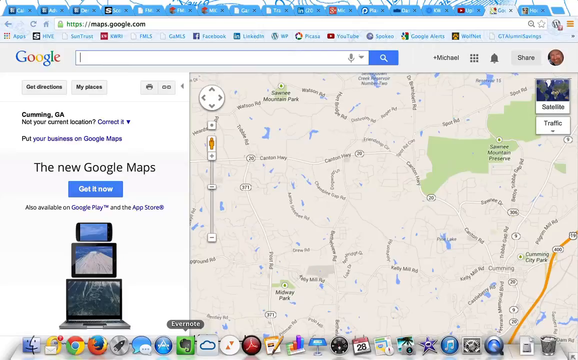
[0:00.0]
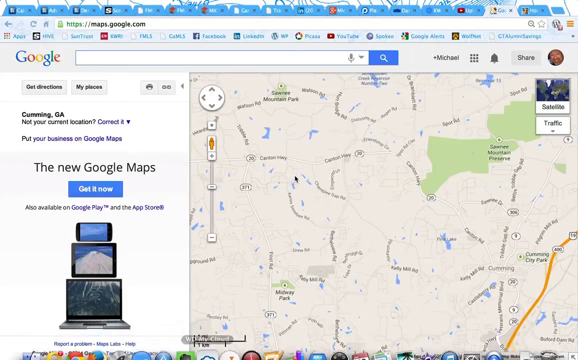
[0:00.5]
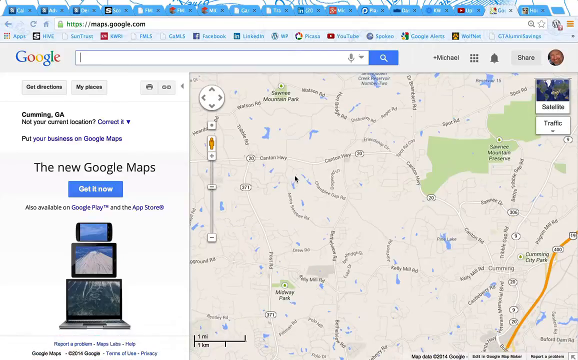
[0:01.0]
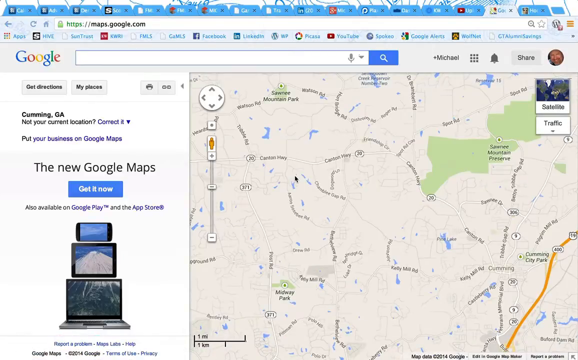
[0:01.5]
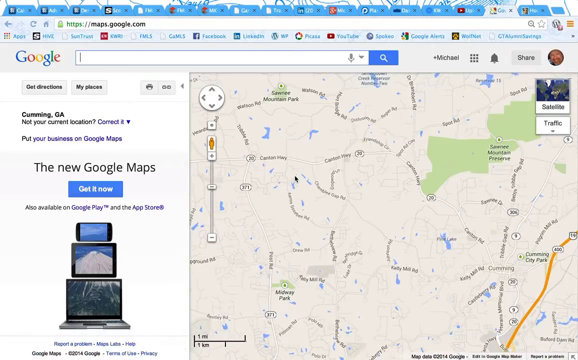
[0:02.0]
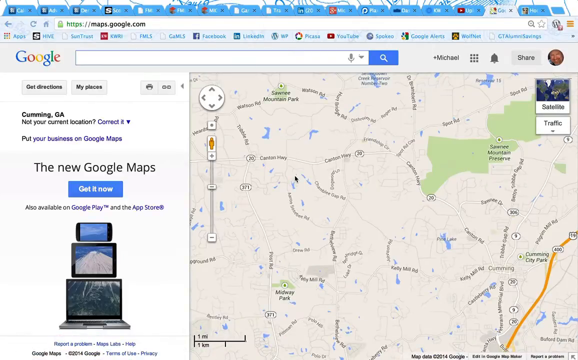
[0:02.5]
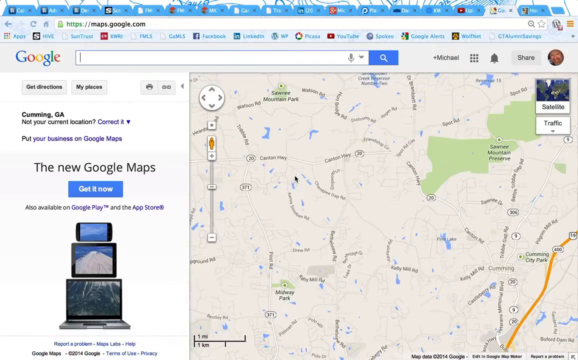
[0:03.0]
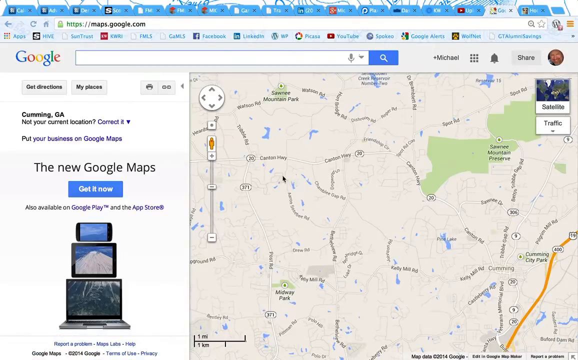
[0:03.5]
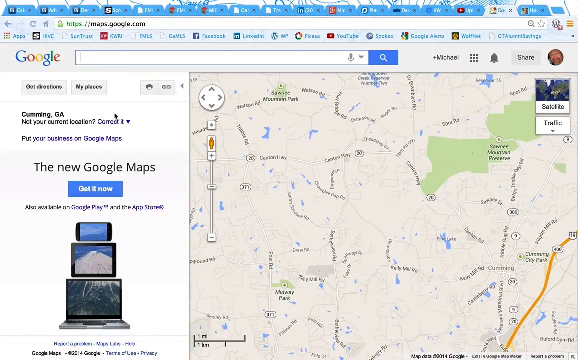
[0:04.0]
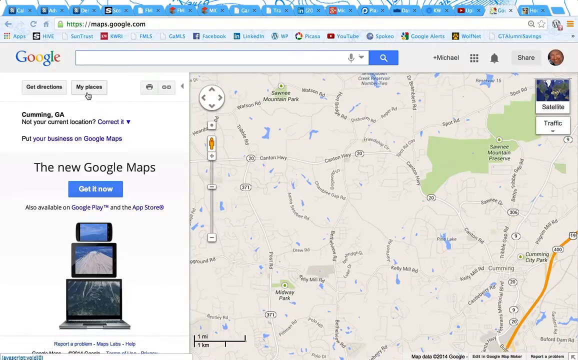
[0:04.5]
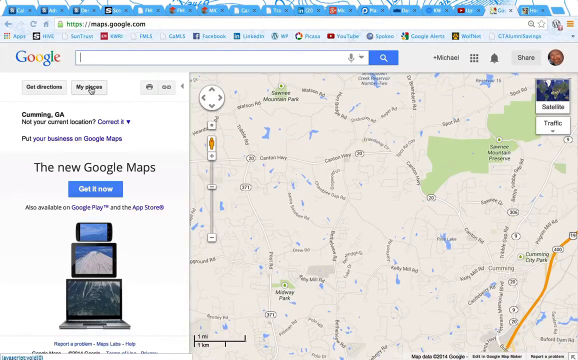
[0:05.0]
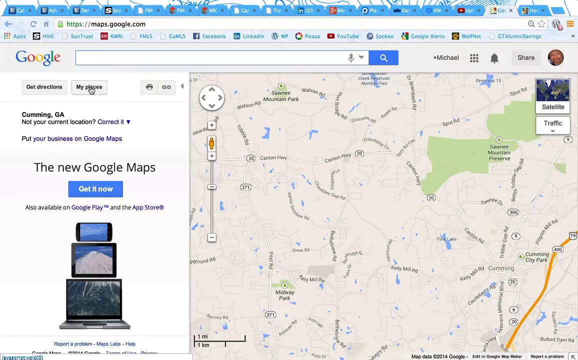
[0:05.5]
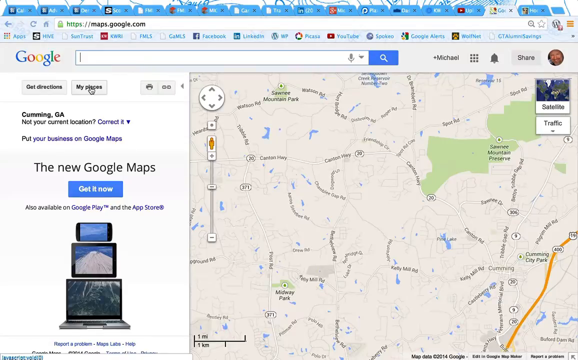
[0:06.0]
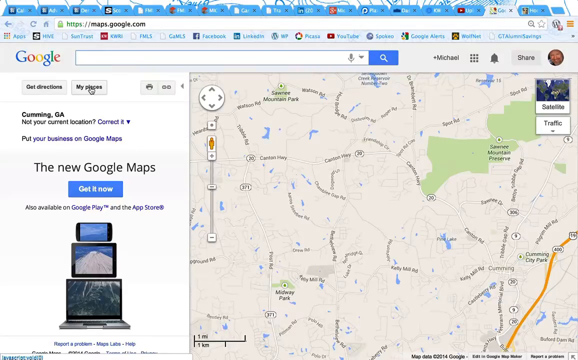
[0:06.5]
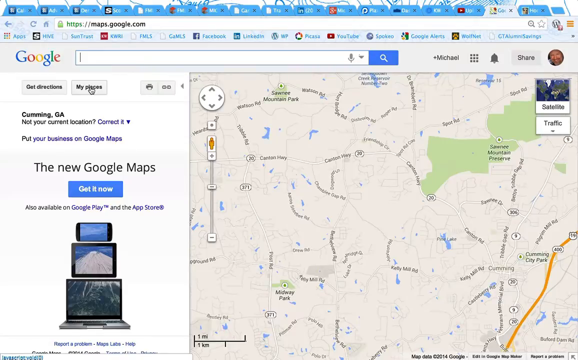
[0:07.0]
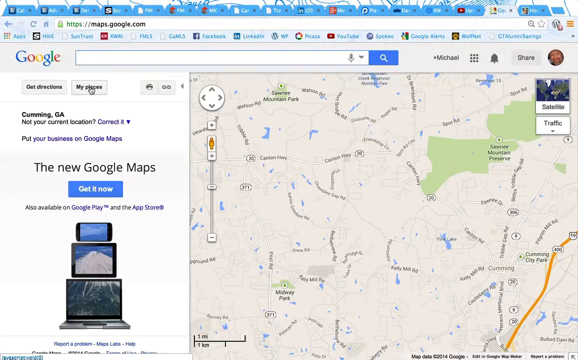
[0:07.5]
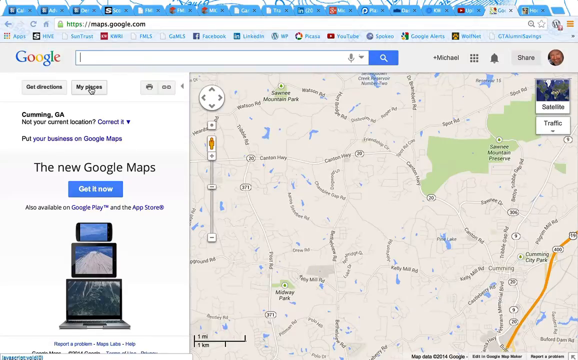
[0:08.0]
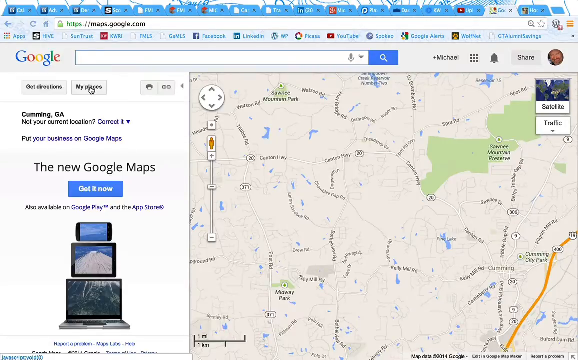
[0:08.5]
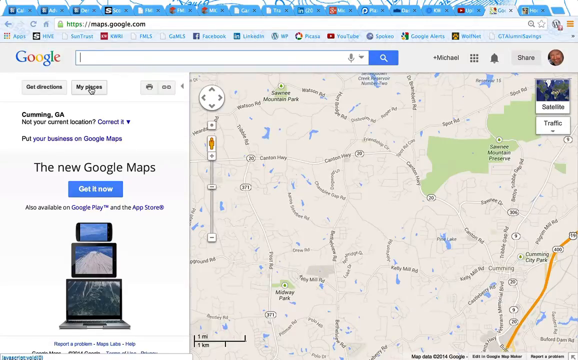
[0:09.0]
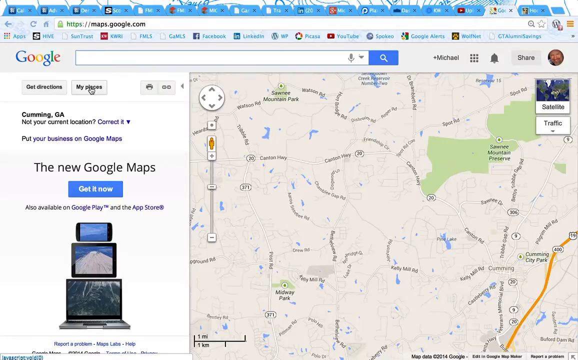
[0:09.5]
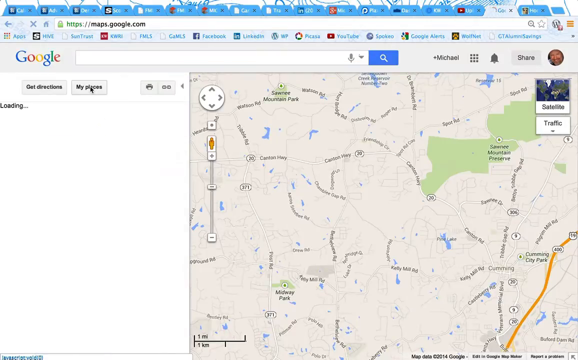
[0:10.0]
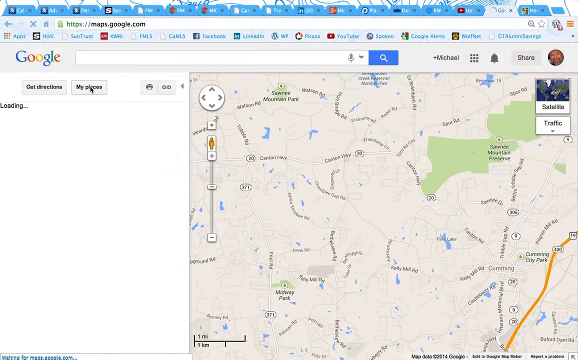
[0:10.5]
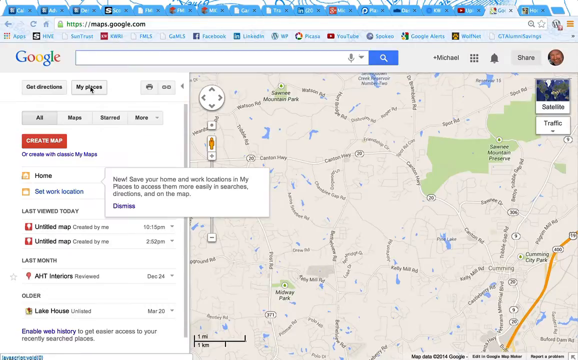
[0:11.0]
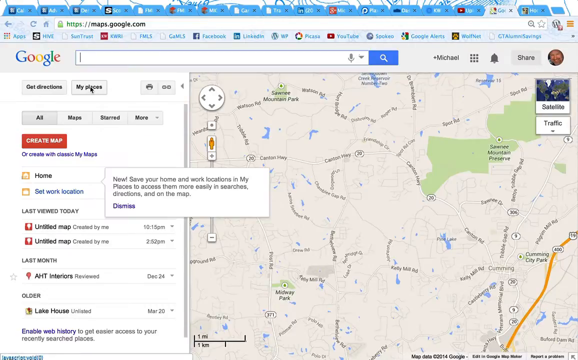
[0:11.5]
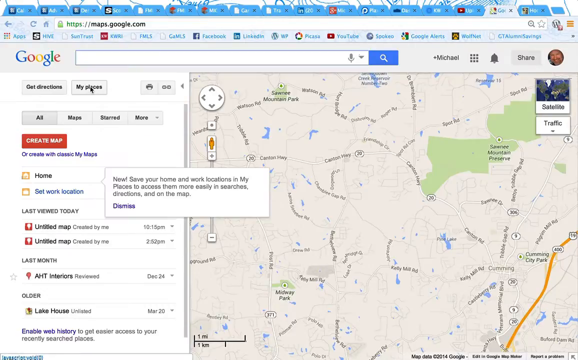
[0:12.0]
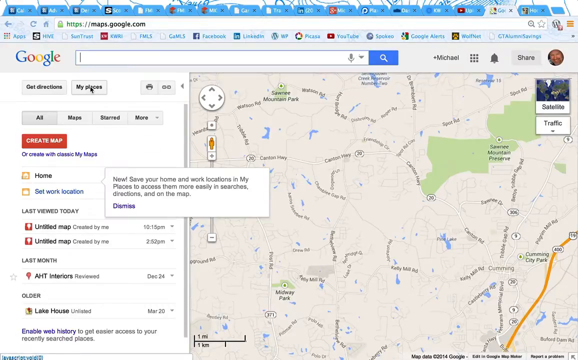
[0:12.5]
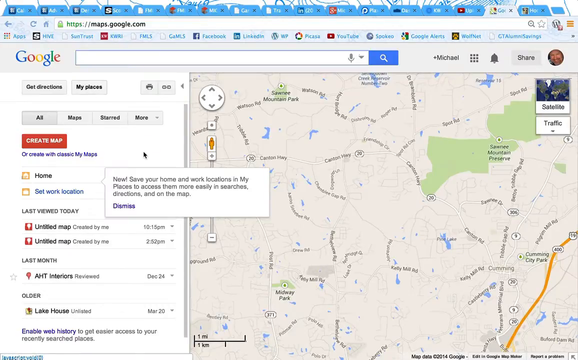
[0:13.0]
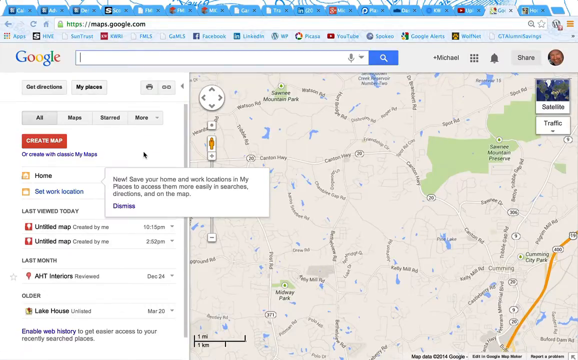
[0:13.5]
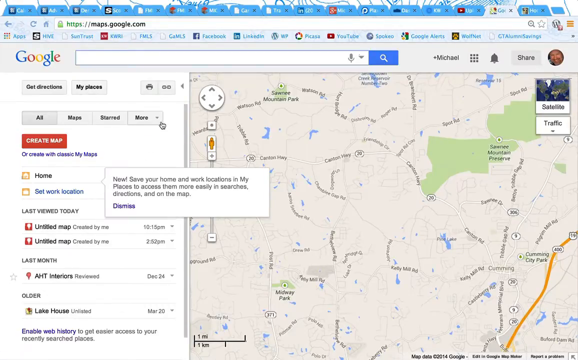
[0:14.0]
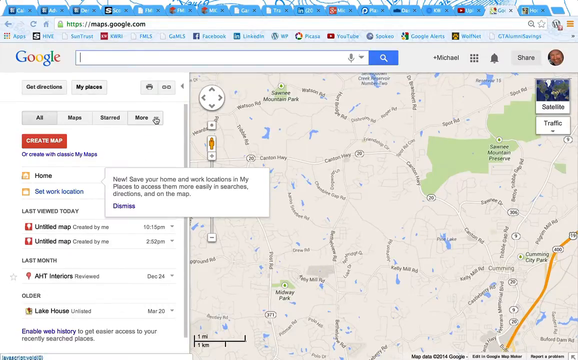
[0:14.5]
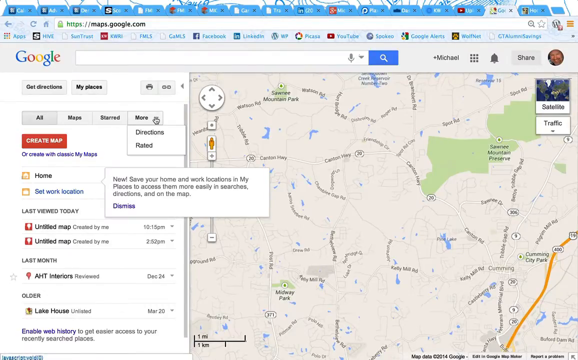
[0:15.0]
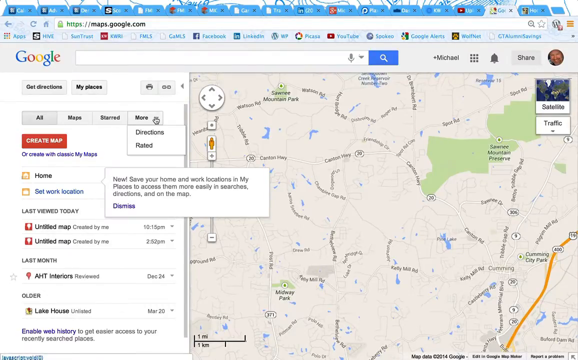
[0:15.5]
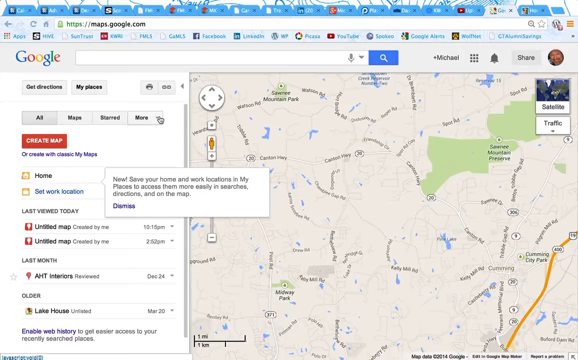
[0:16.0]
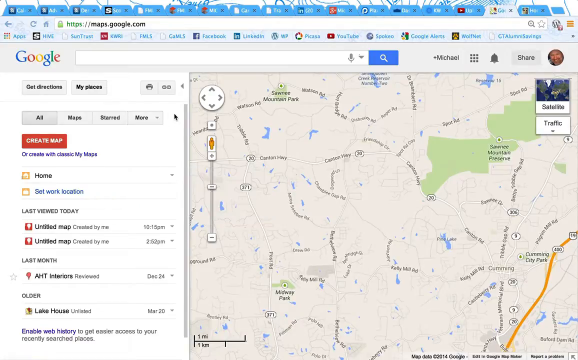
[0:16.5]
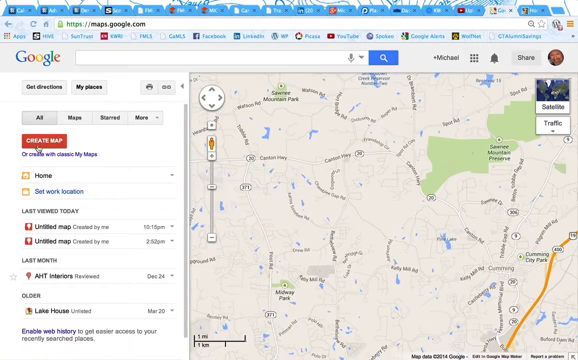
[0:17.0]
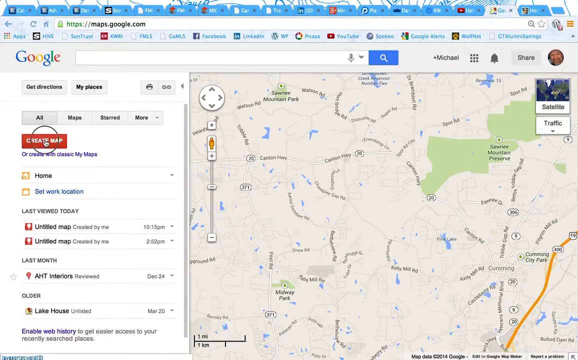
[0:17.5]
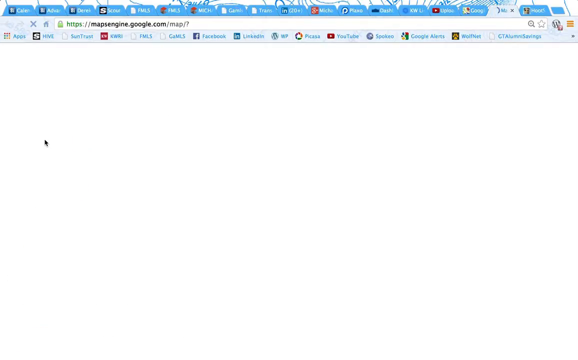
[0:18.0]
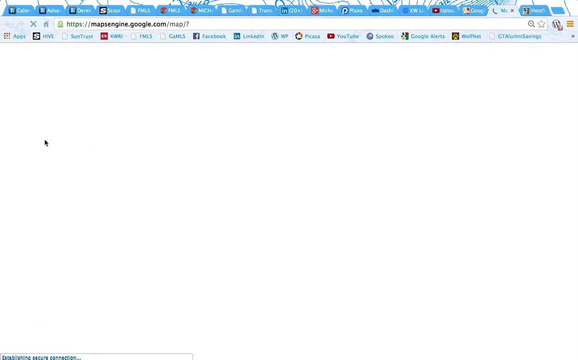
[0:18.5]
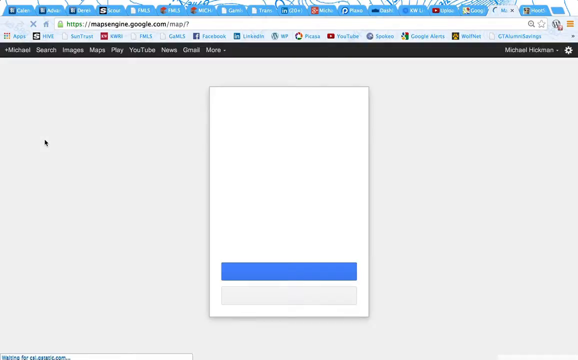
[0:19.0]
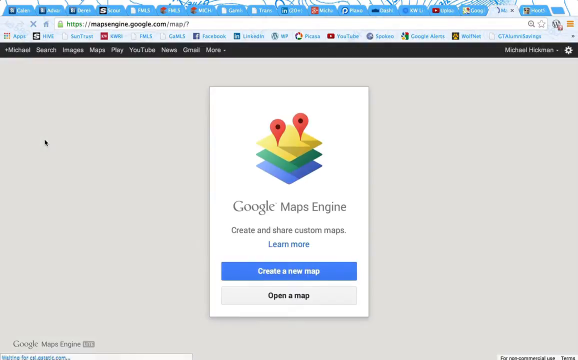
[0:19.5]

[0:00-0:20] A Google Maps screen is open on a desktop device. On the left side of the screen, text reads "the new Google Maps. Get it now." and on the right side is a map of a terrain. A mouse cursor appears on the left, beneath the My places button, then moves and clicks on My places. Details load on the left: home, set work location, last viewed today, last month, and older. The cursor then moves and clicks on Create Map, and a map icon begins to load in the main part of the screen. The Google logo is prominently displayed in the upper left corner of the screen.